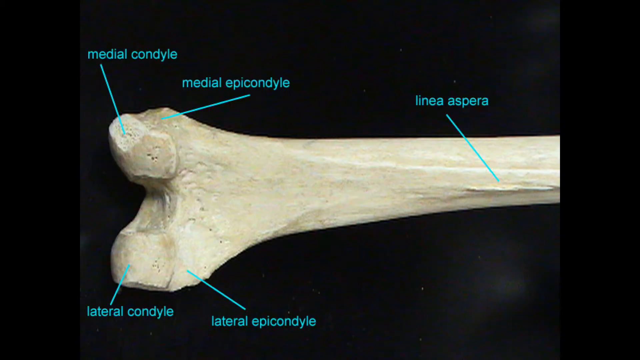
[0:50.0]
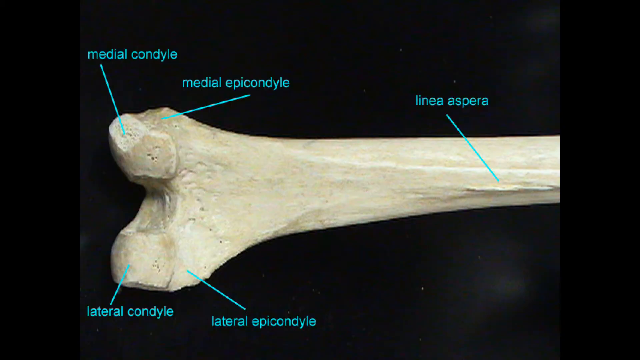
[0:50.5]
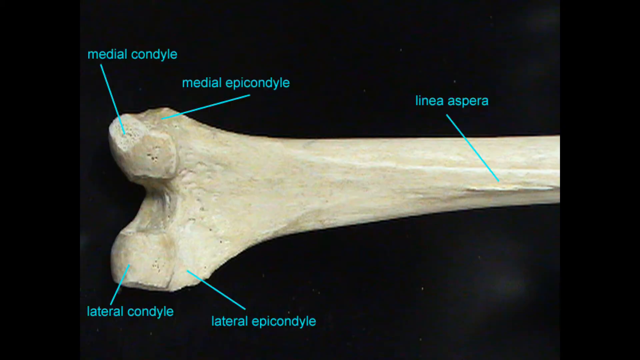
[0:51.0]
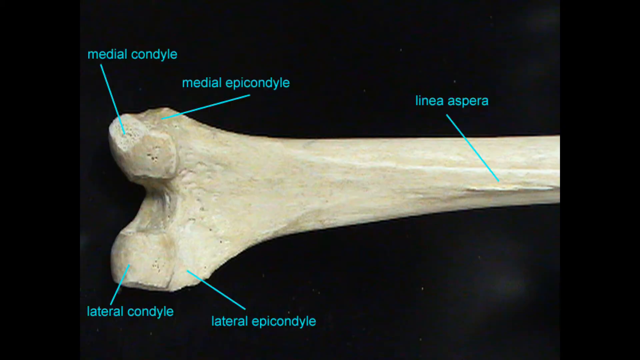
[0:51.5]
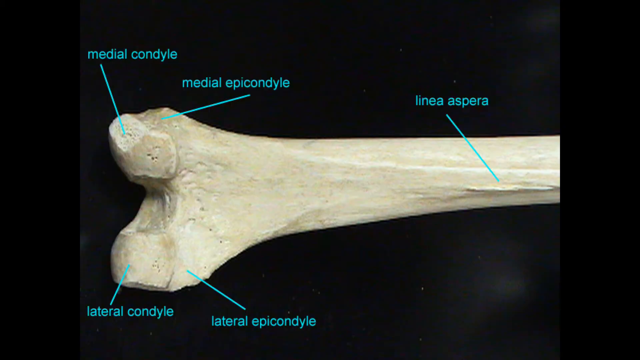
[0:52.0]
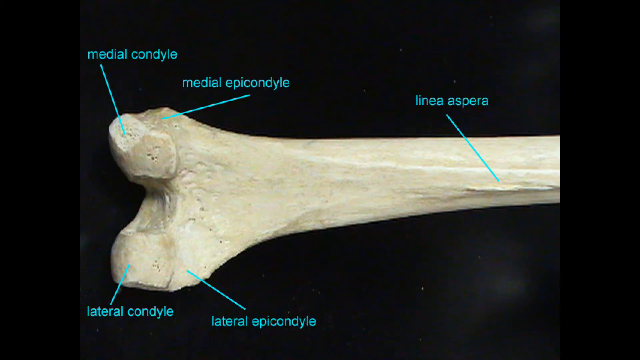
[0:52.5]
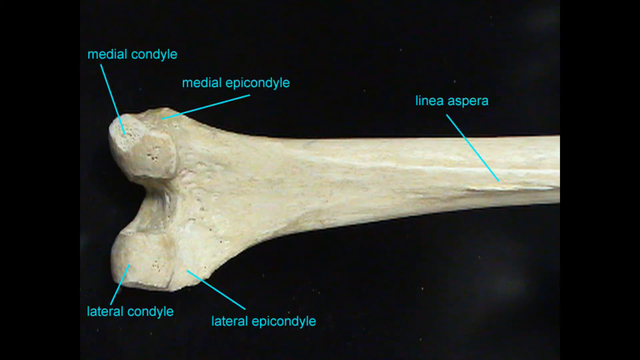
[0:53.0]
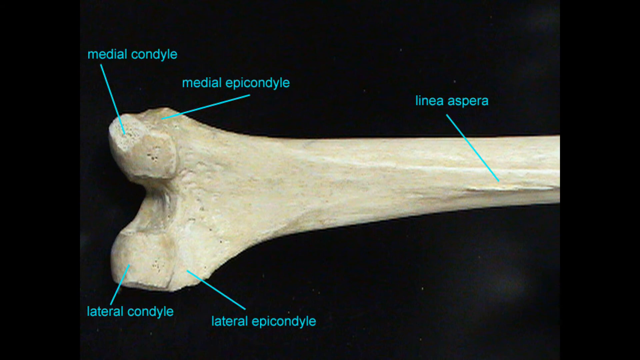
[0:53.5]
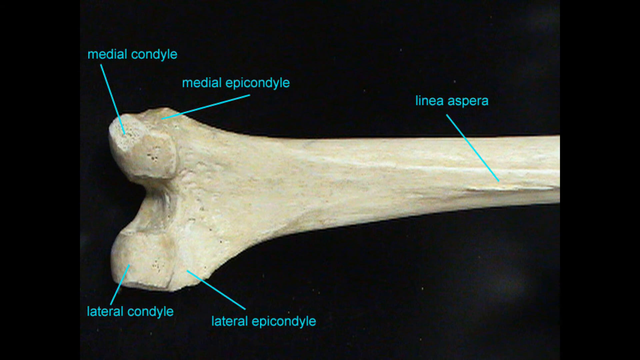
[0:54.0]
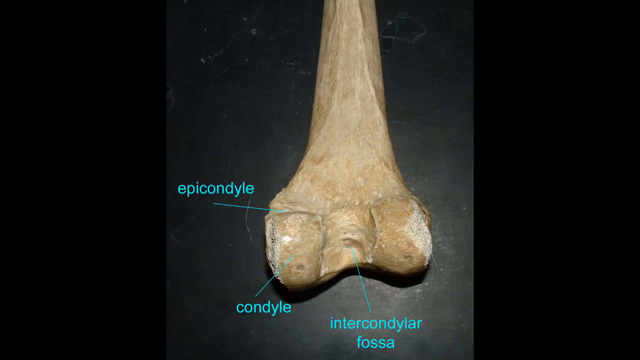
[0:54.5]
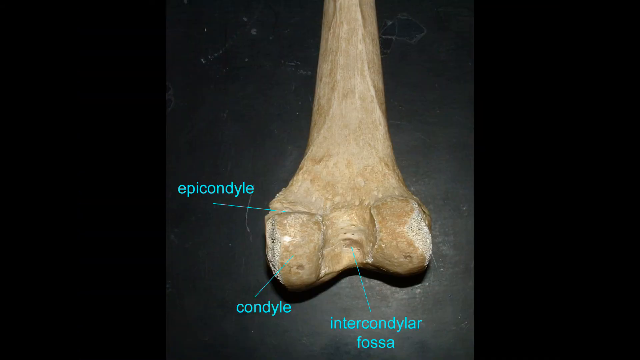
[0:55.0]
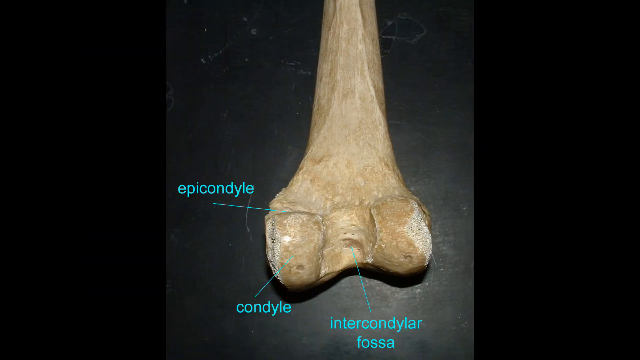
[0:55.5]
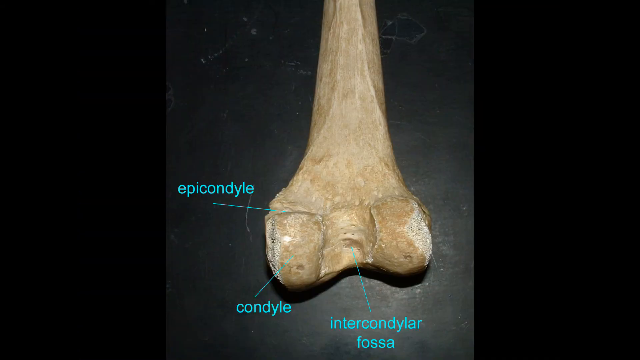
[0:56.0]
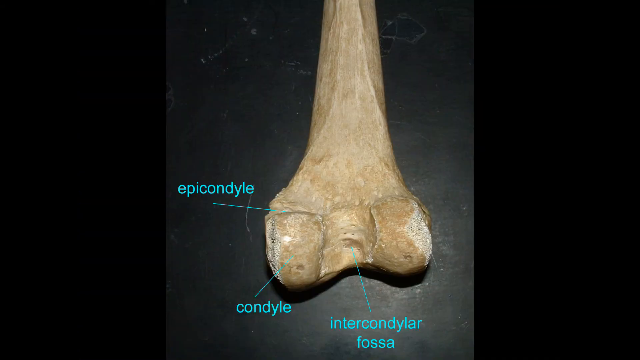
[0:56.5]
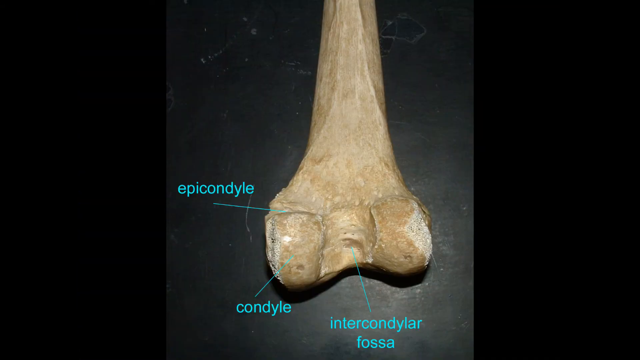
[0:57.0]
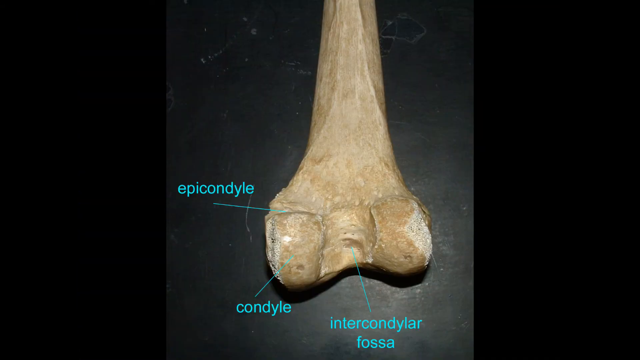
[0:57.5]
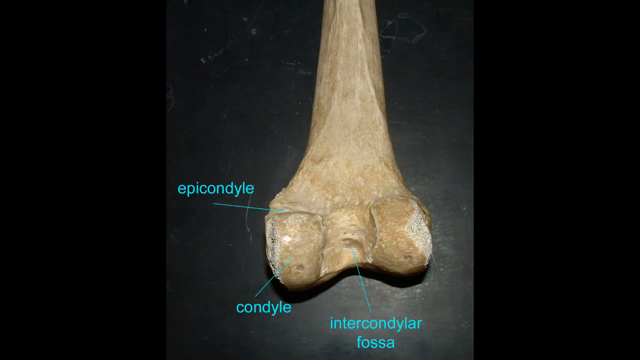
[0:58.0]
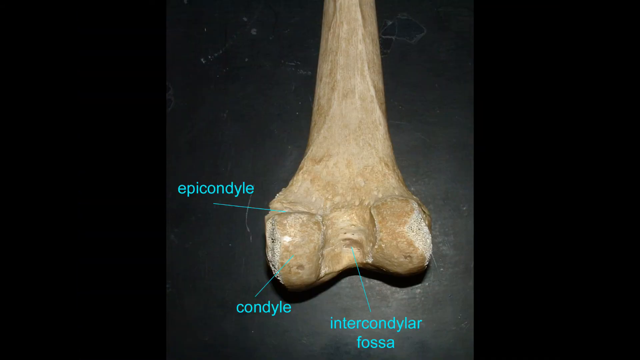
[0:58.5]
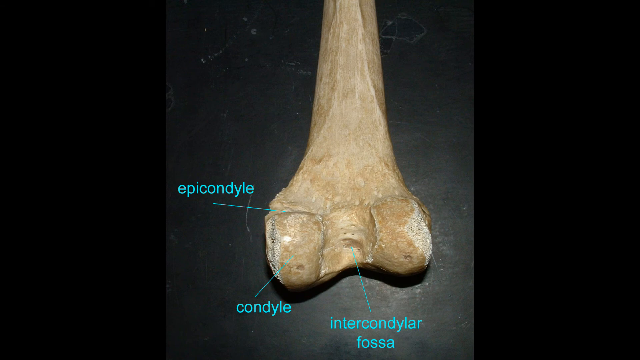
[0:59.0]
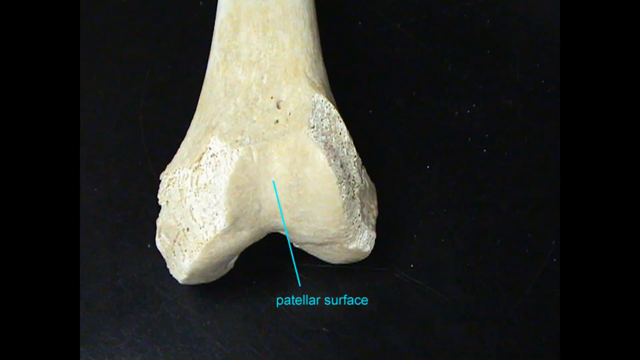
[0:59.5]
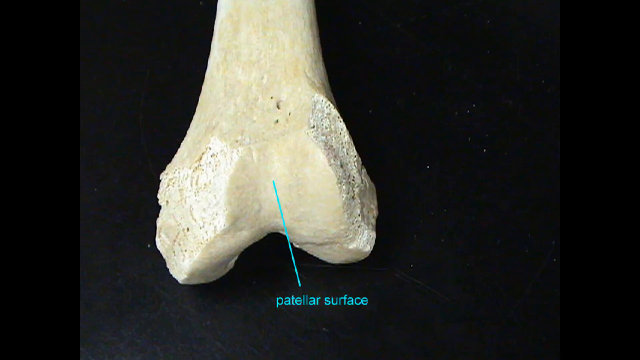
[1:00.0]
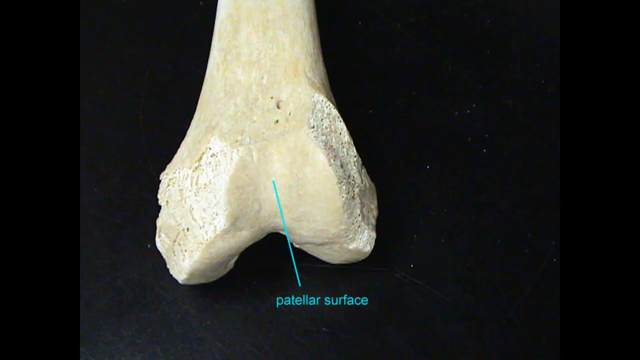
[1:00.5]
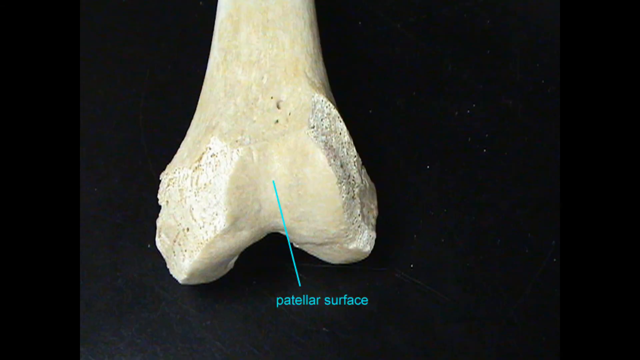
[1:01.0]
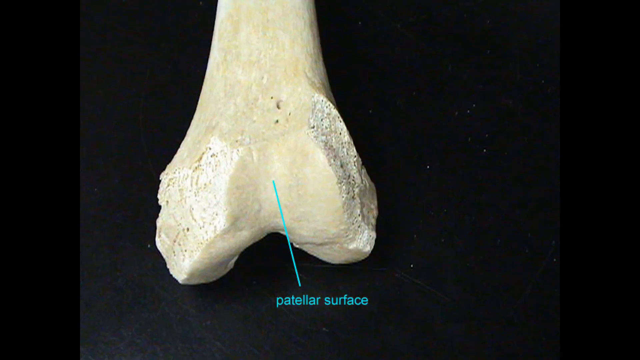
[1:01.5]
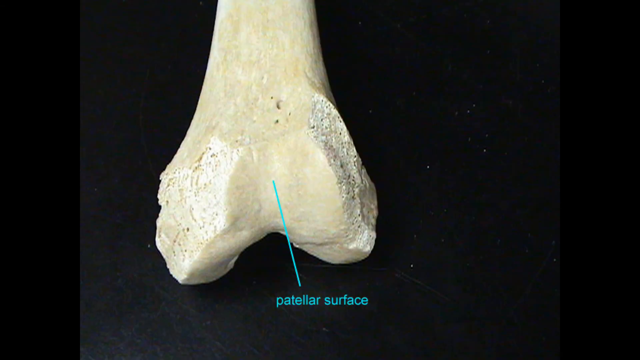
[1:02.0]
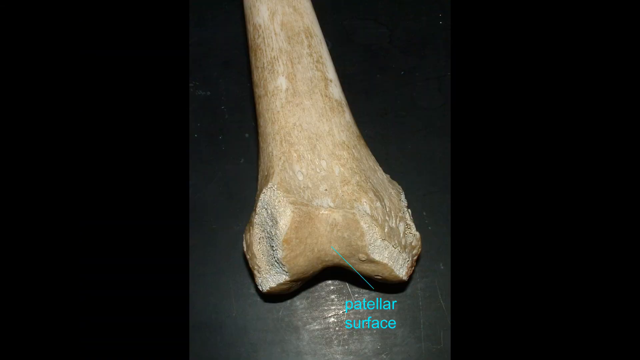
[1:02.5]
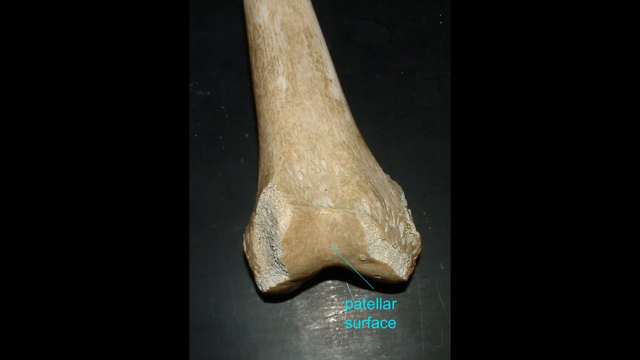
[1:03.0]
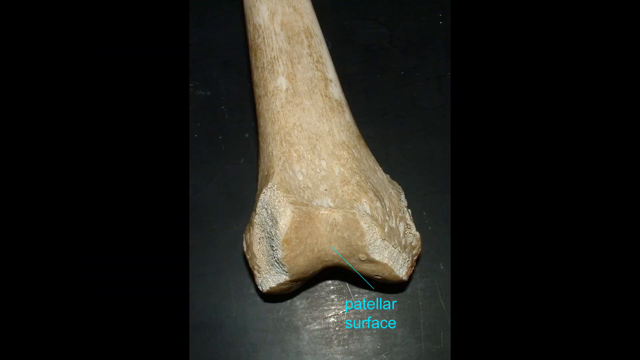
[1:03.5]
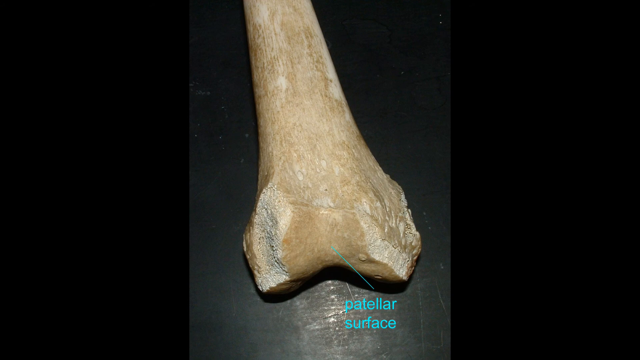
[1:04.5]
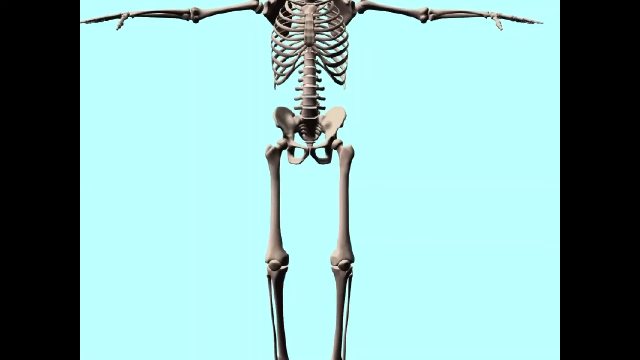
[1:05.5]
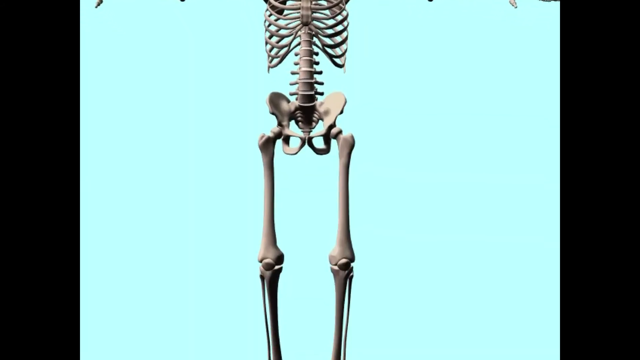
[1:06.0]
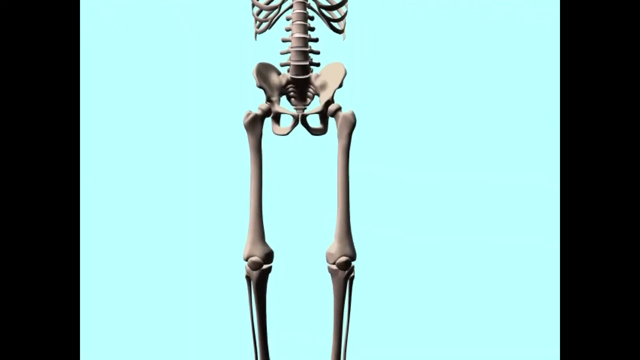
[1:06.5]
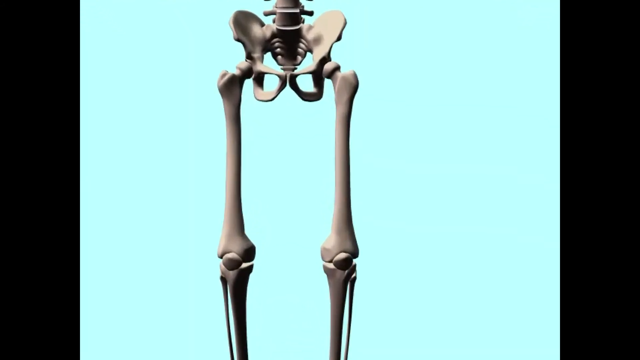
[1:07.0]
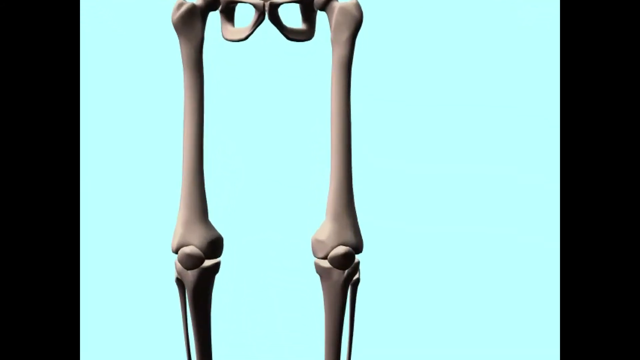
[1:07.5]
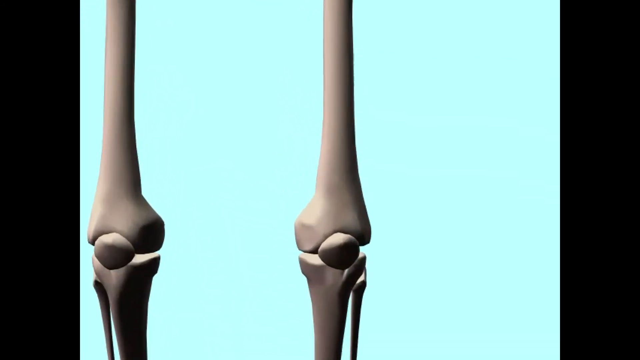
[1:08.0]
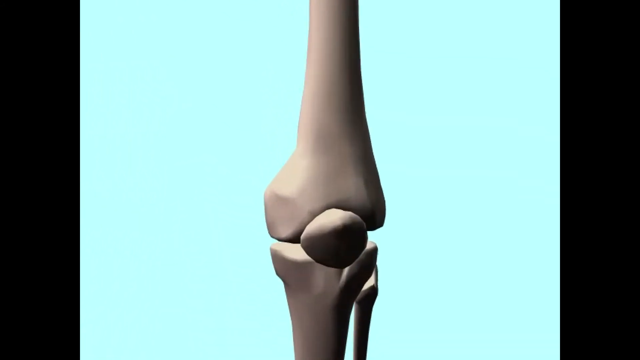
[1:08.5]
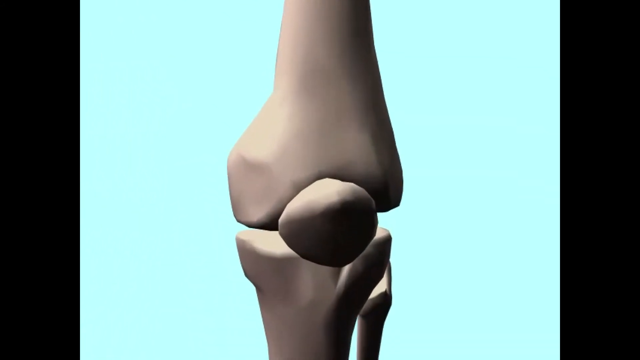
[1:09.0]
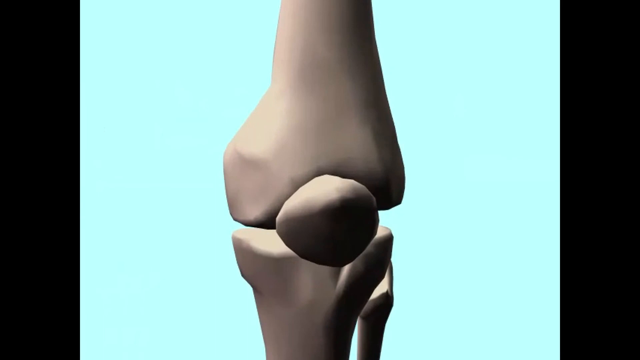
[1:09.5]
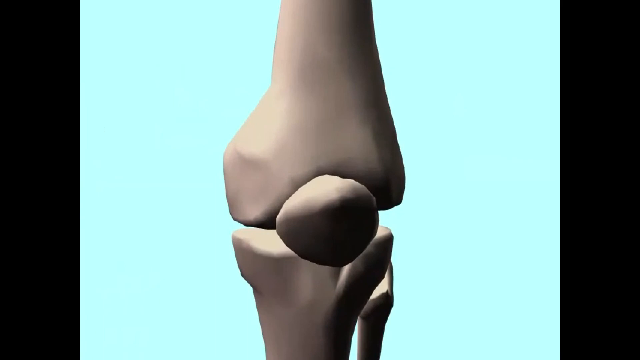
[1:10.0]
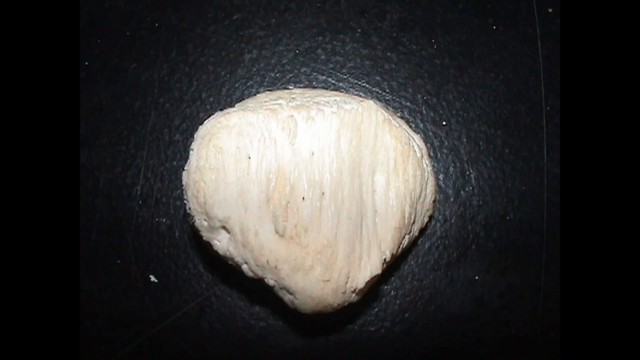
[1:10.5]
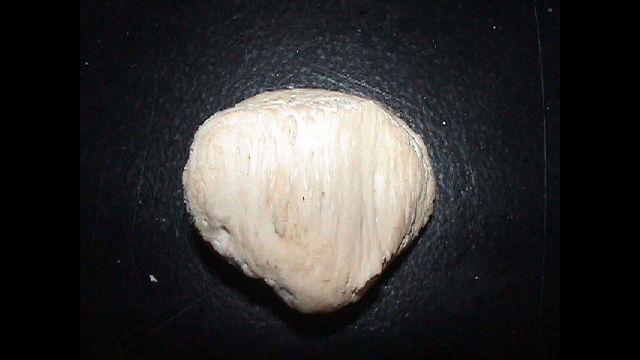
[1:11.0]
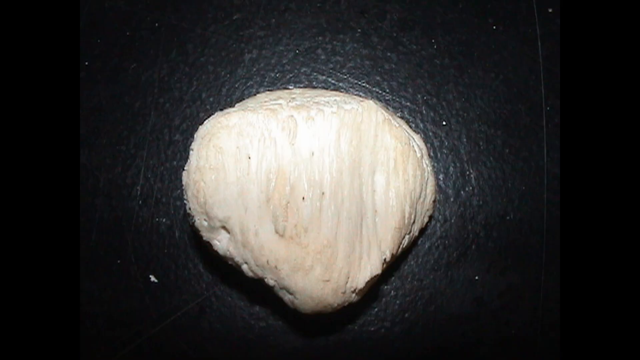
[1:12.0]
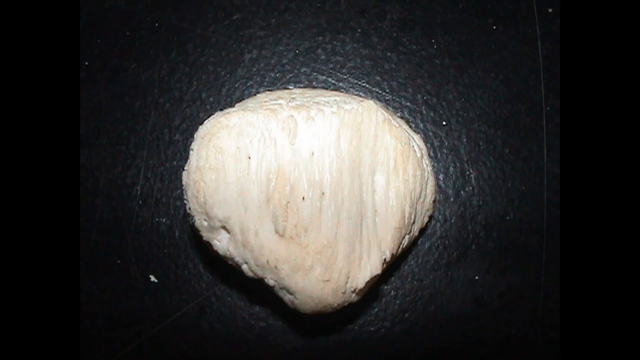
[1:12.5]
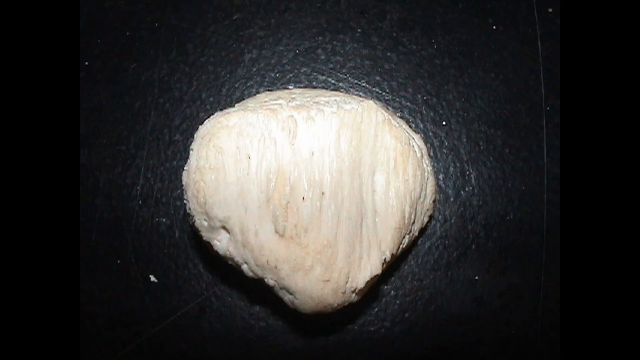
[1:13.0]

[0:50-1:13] A bone lays horizontally on a table, with a black table behind it, and five labels that were seen previously. A different view follows, with the bone laying vertically on a table with three labels. Then a closer-up vertical view of the bone appears with one label, followed by another vertical view of the bone at a slightly tilted angle. The skeleton is shown standing up, and the view starts to zoom in to the knee area. Then an image shows the knee bone on a black background table. The knee bone is white and quite well lit, with a beam of light visible on the bone and a shadow on the table.